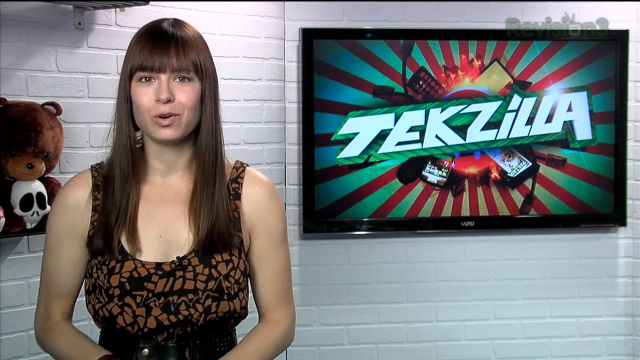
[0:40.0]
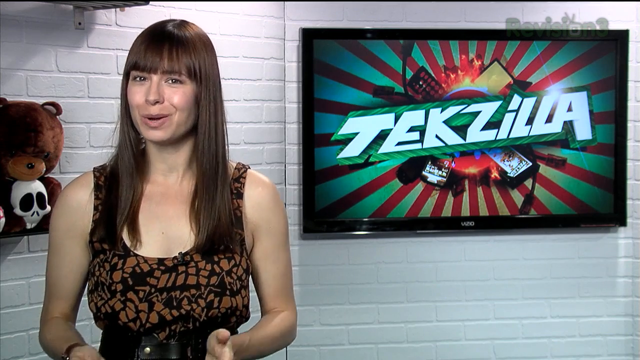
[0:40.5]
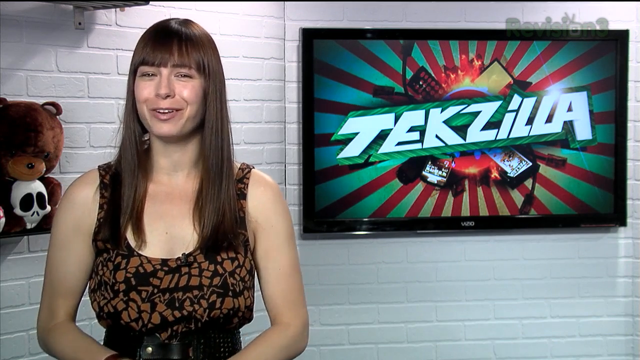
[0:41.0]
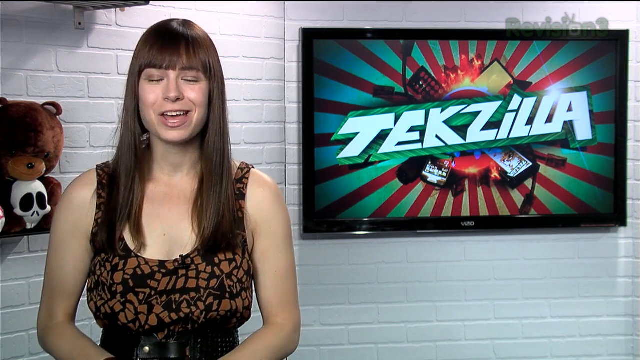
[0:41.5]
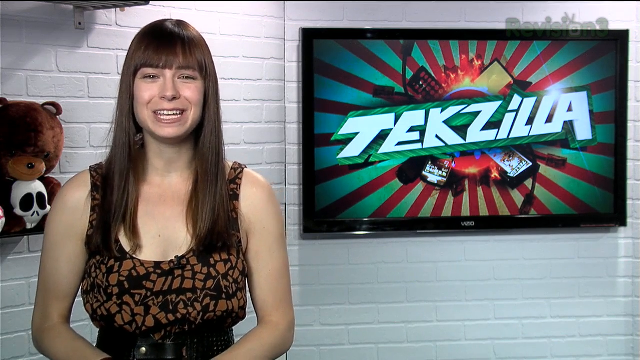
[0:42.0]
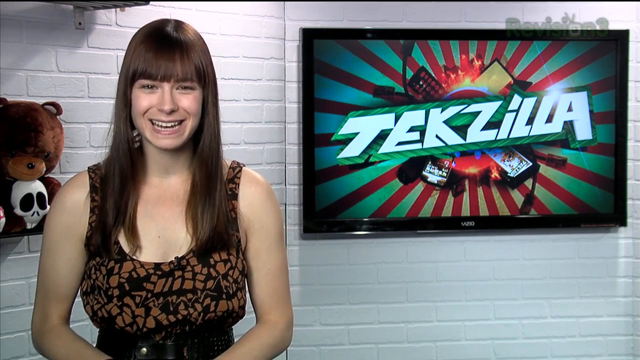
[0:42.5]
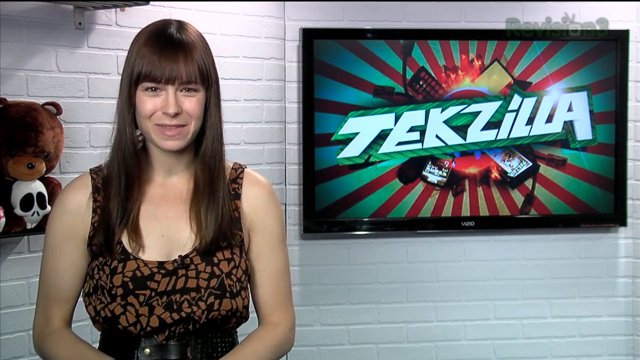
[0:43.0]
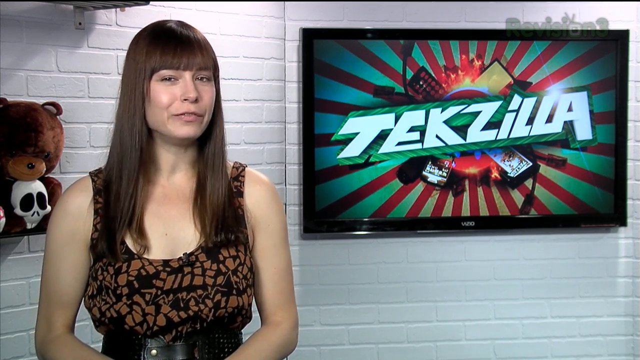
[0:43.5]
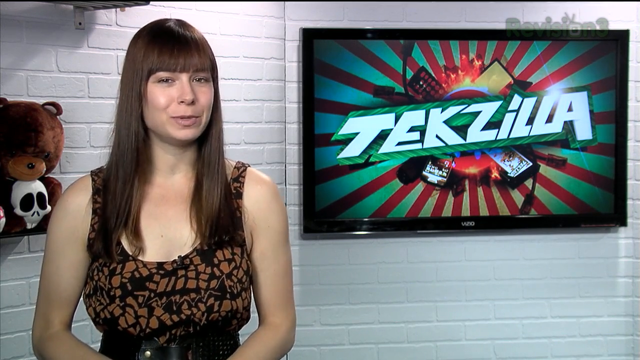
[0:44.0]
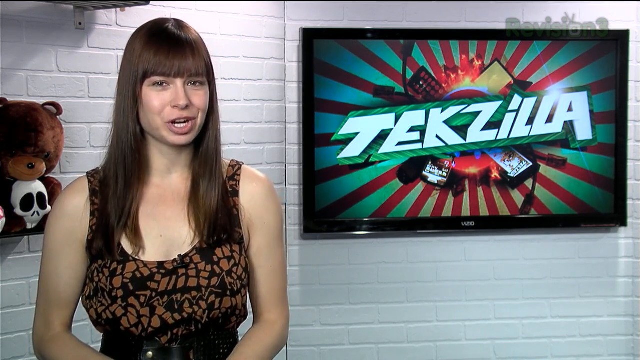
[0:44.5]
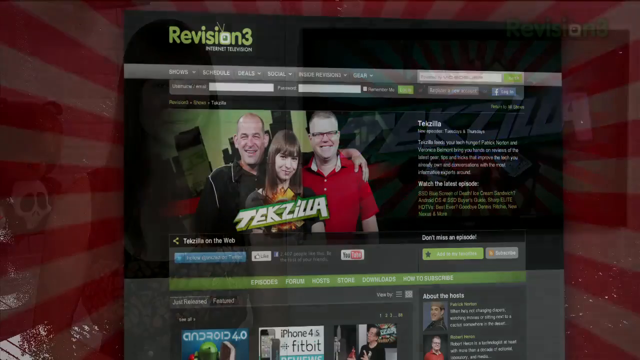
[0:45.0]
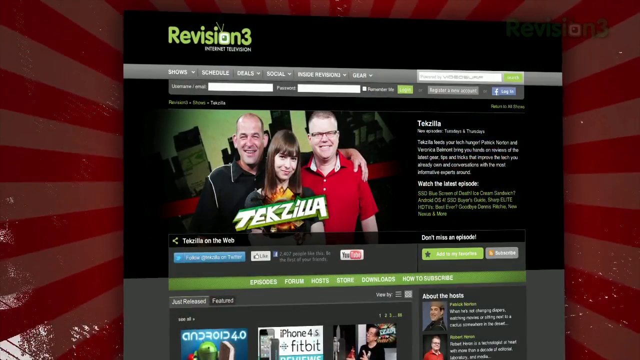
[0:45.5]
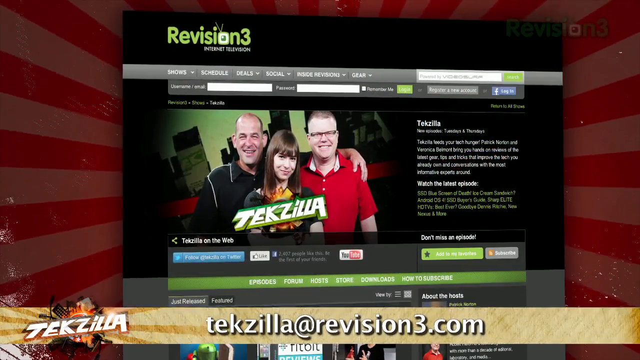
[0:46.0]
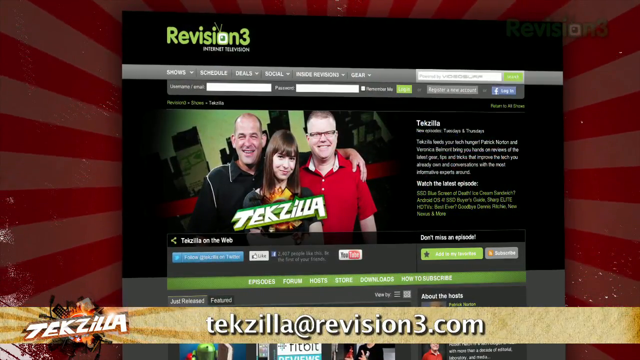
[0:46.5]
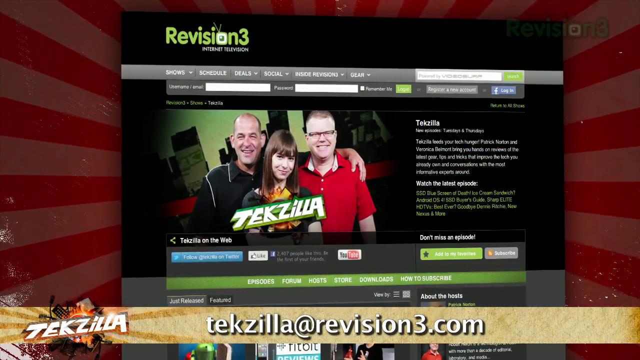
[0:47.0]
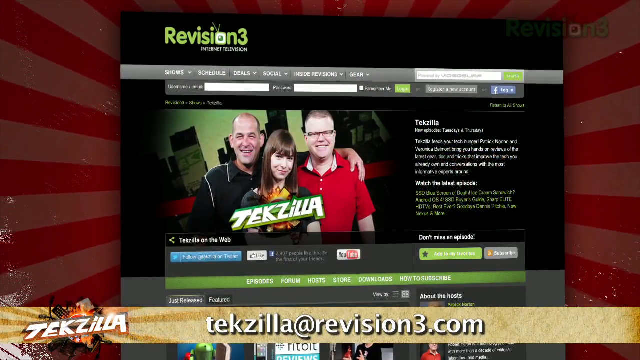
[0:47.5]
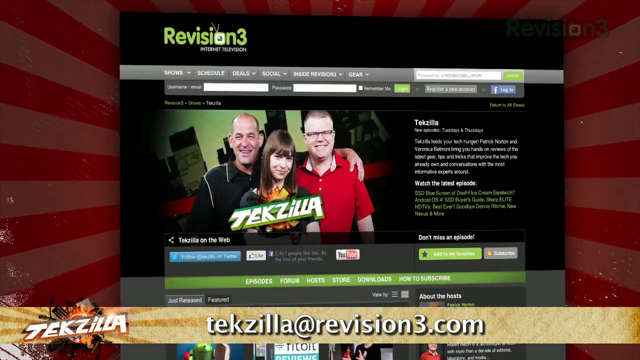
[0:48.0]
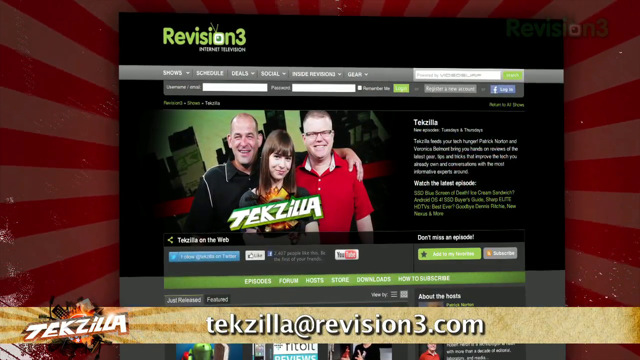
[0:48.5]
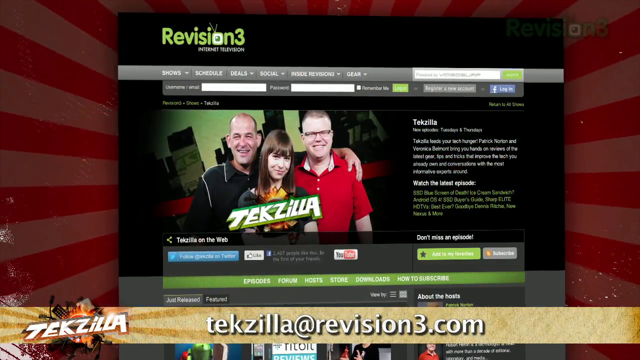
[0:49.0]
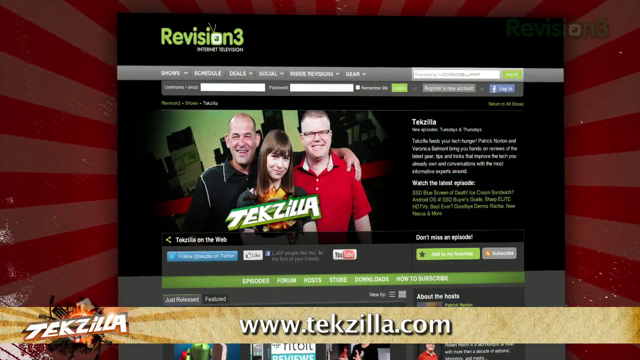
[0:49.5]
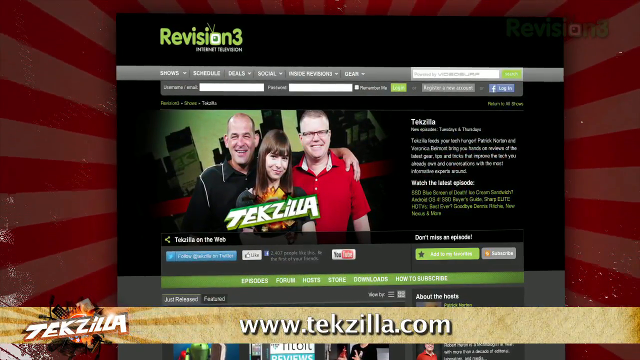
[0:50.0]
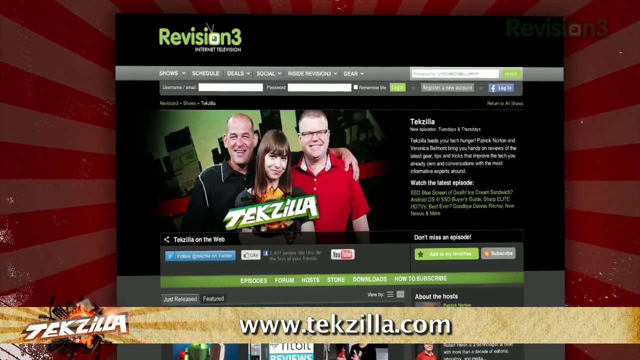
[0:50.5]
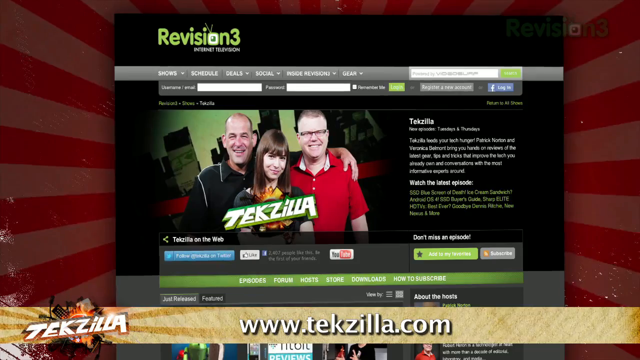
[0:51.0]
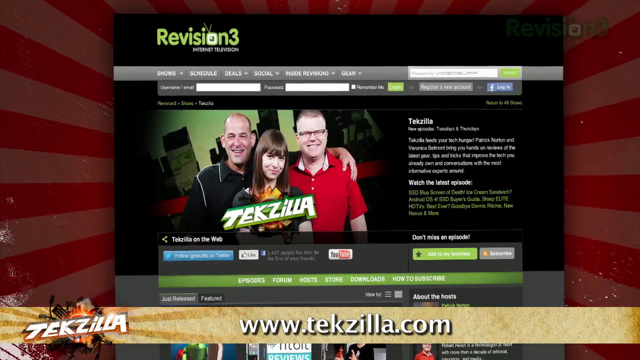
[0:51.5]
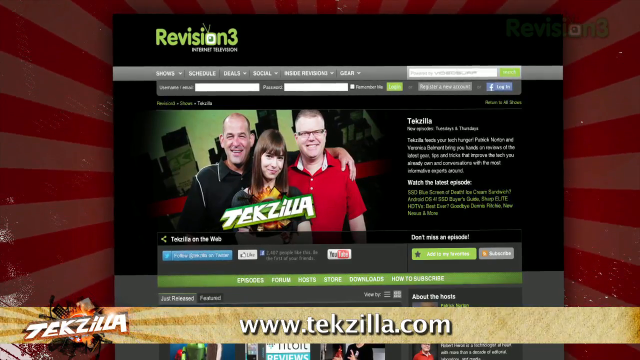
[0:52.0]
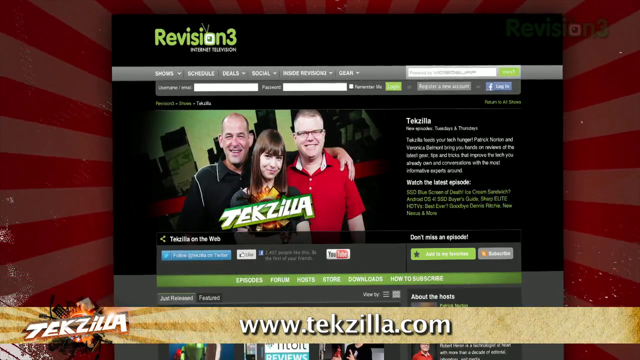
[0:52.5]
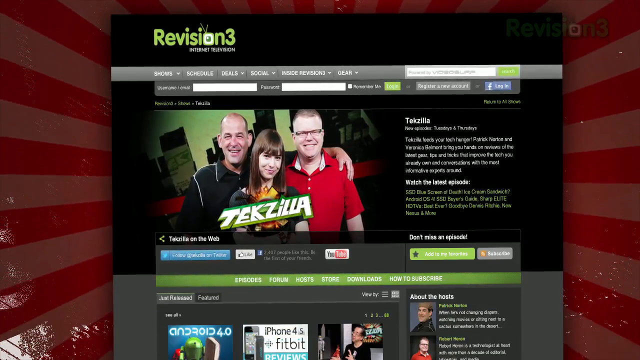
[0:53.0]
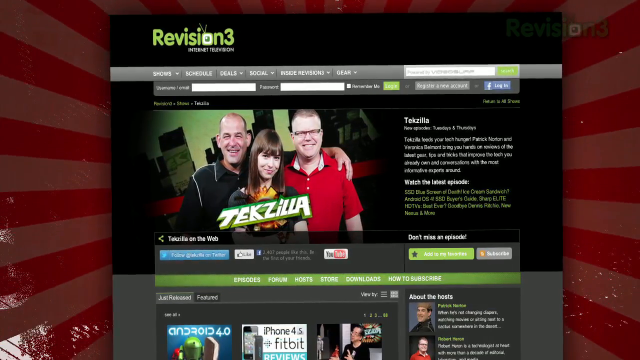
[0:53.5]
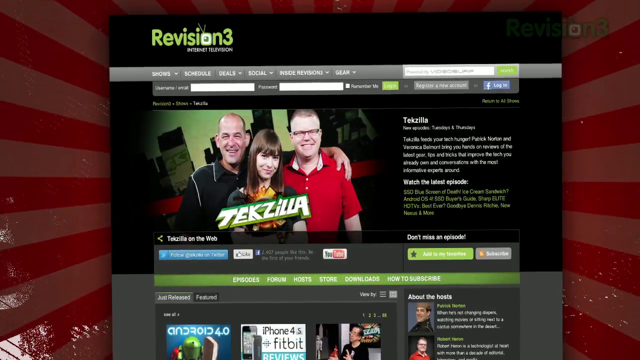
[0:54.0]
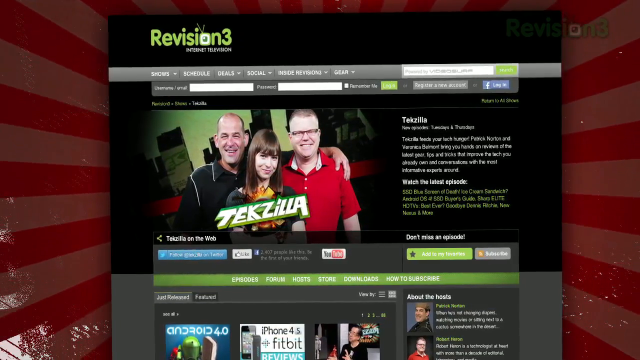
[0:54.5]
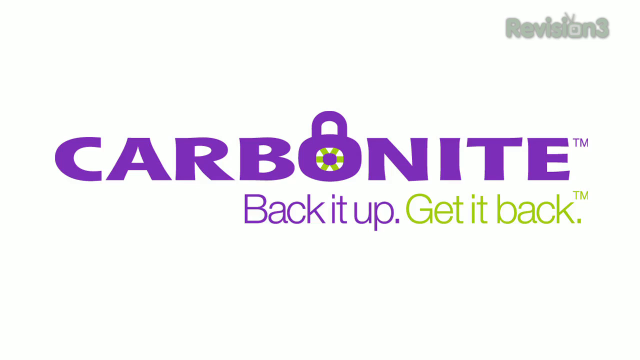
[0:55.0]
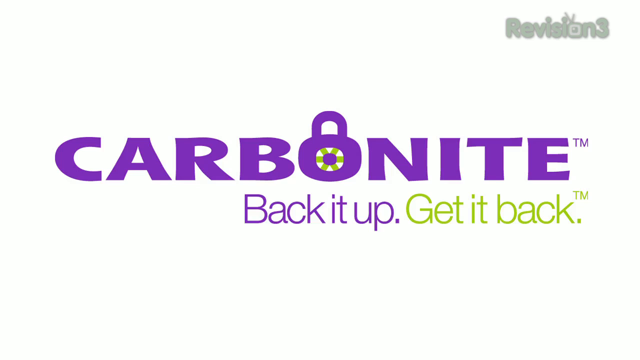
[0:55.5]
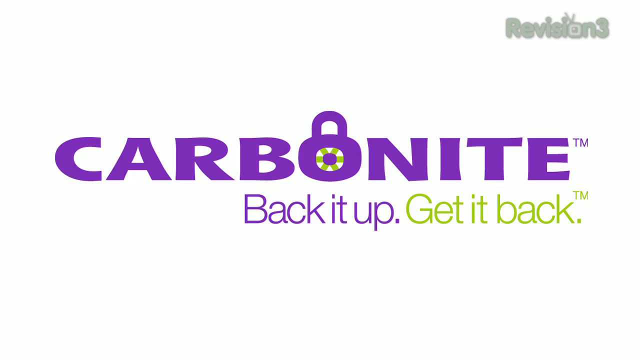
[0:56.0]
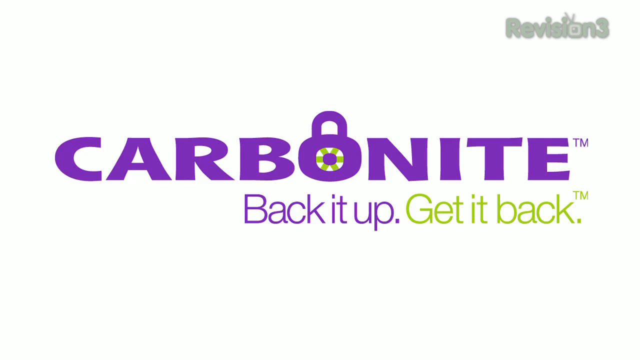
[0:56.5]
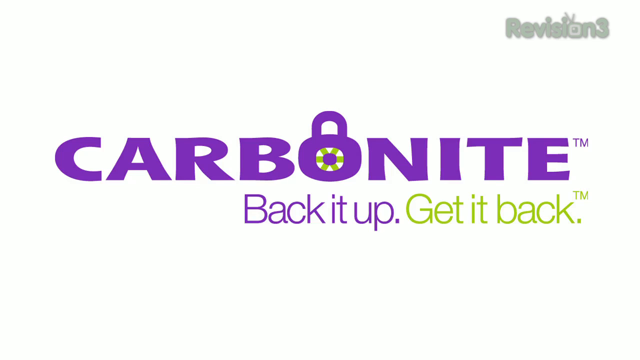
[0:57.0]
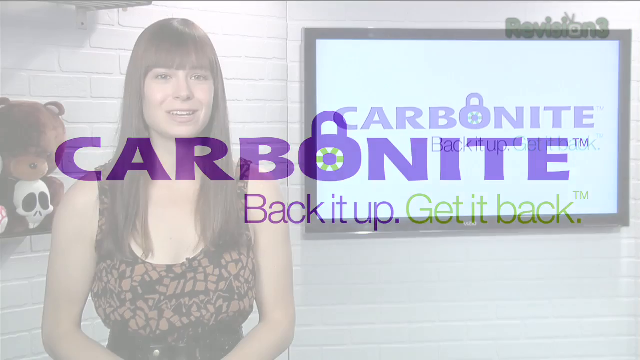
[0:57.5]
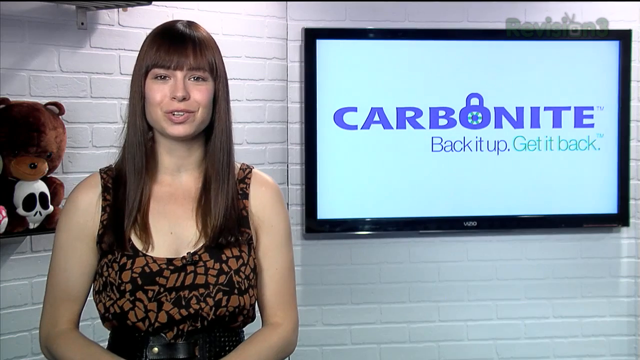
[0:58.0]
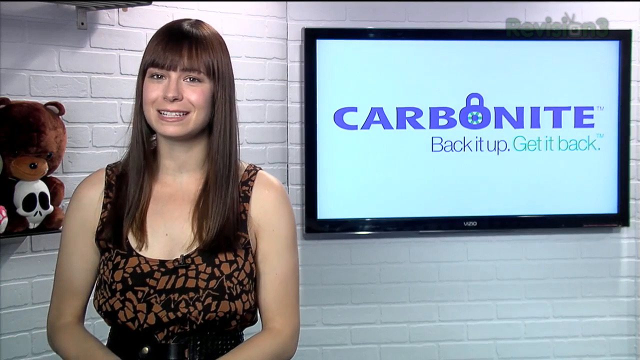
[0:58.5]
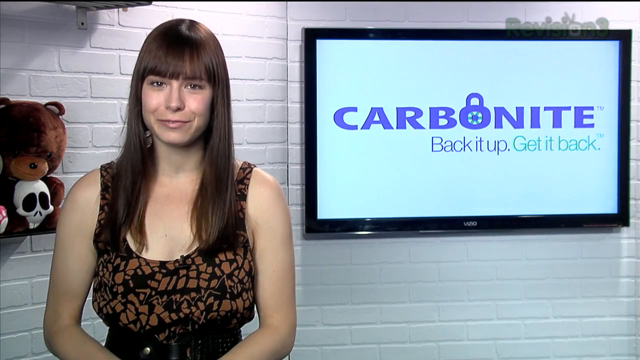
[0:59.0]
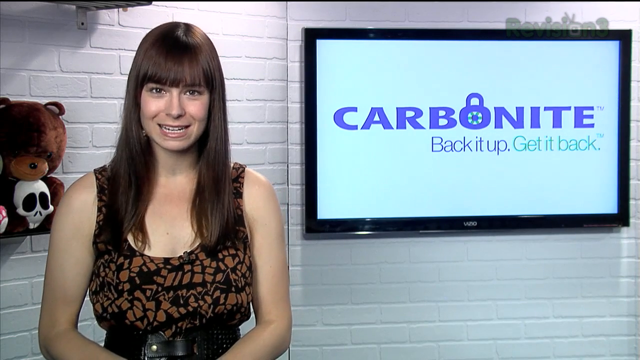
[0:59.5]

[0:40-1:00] The female speaker, in the black and brown dress with long straight brown hair and brown eyes, speaks in front of the white brick wall. The television hanging on the wall behind her still displays the Tekzilla logo. She looks at the camera and speaks with a wide smile, nods gently toward the camera, then turns her face slightly to her left. The video transitions to an image with "Revision 3" in the upper left-hand corner. In the center of the screen is an image of a female in her late 20s; behind her right shoulder is a middle-aged balding white man approximately 6 inches taller than her, wearing a black collared shirt buttoned up and smiling. He has his left arm around a gentleman in a red button-up shirt with white collars. A white male wears black-rimmed glasses and has thinning hair on top. The word "Tekzilla" is written to the right of the three individuals, and at the bottom of the screen "Tekzilla@revision3.com" is visible. The screen tells viewers "don't miss an episode, Tekzilla on the web". The video then transitions to an all-white screen with "carbonite" written in purple, the O shaped like a padlock. Underneath are the words "back it up" in purple and, written in green, "get it back".